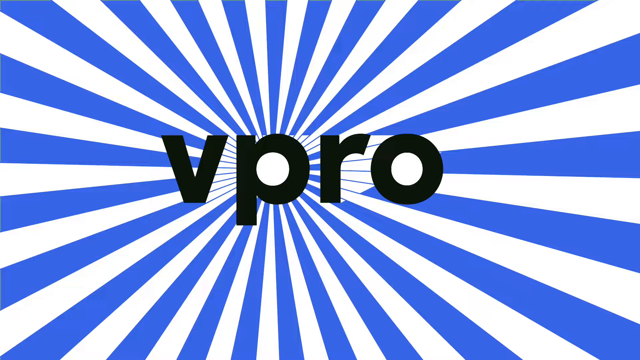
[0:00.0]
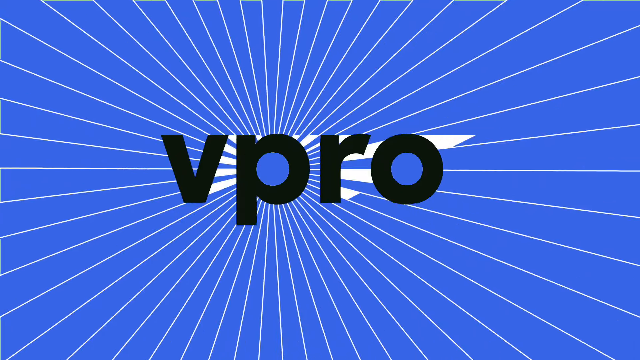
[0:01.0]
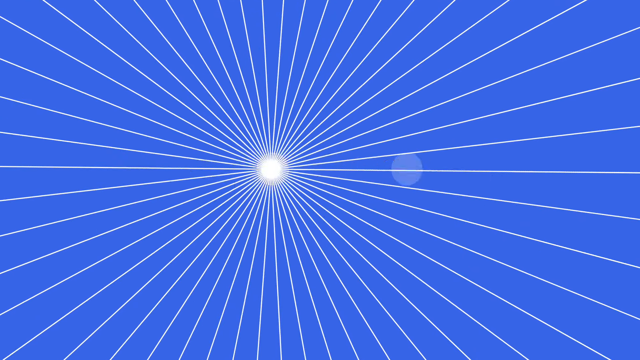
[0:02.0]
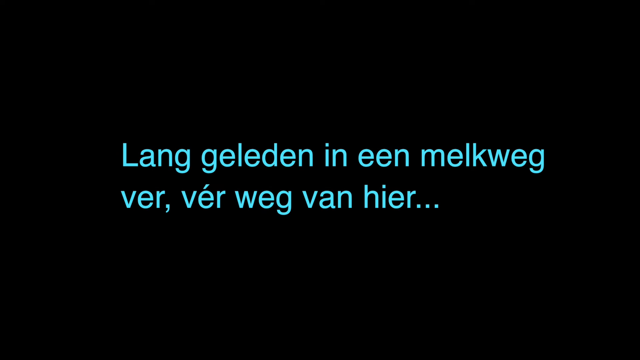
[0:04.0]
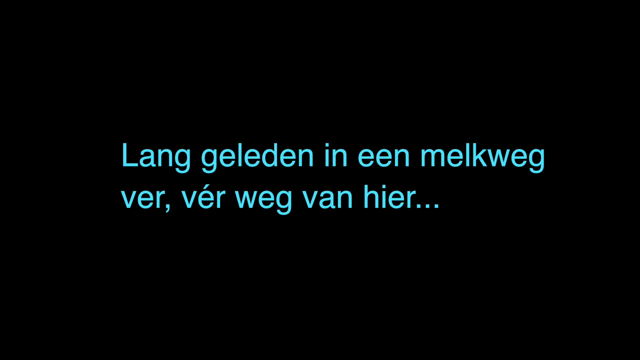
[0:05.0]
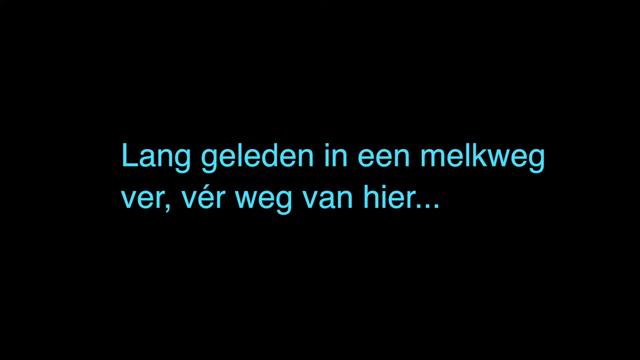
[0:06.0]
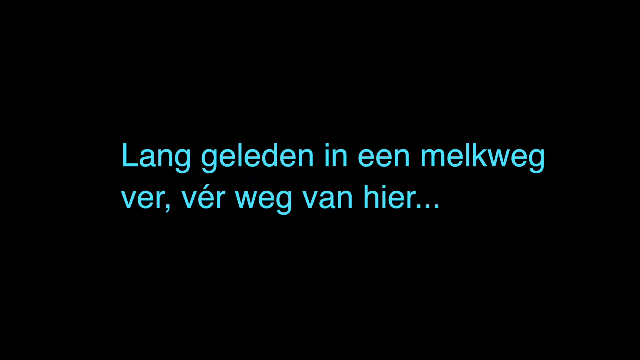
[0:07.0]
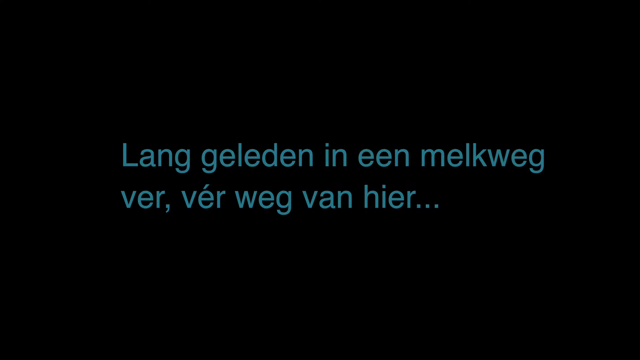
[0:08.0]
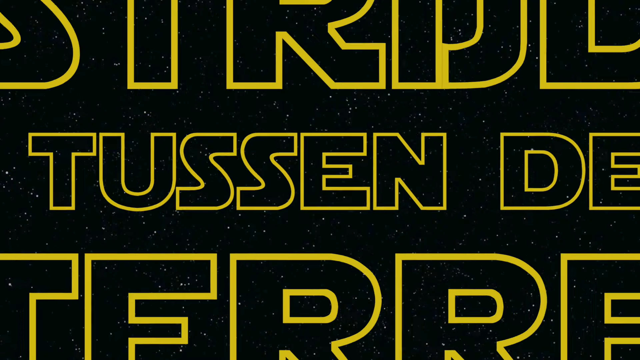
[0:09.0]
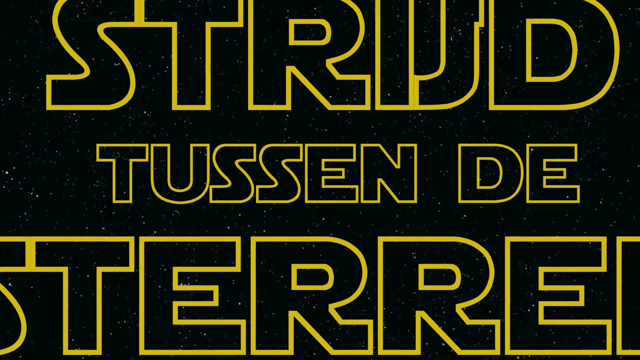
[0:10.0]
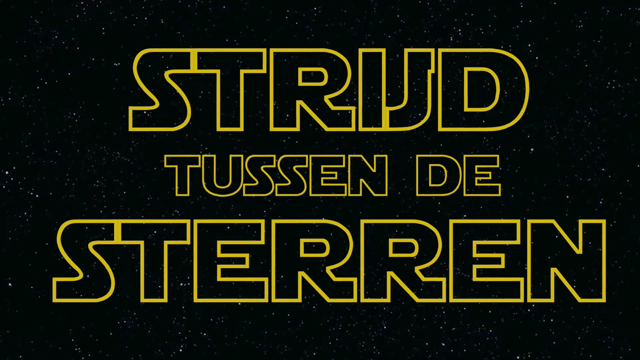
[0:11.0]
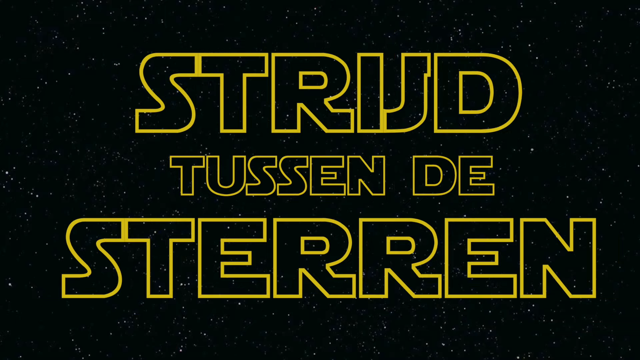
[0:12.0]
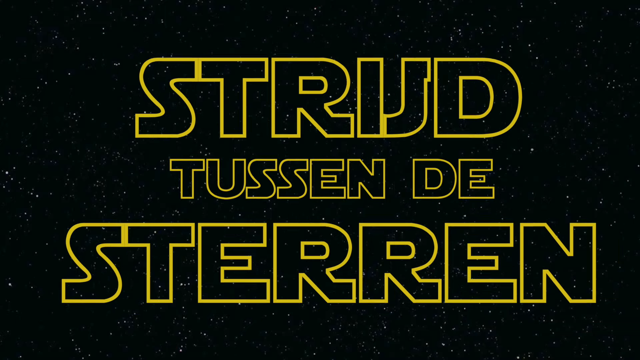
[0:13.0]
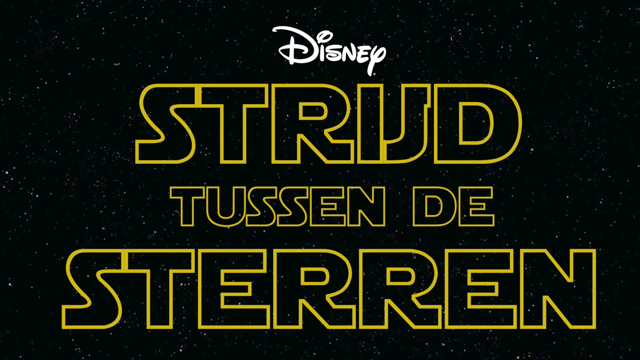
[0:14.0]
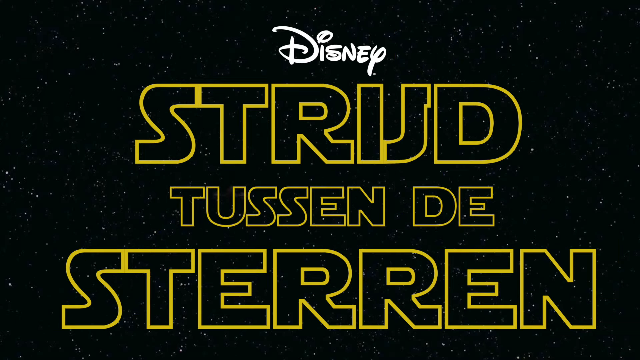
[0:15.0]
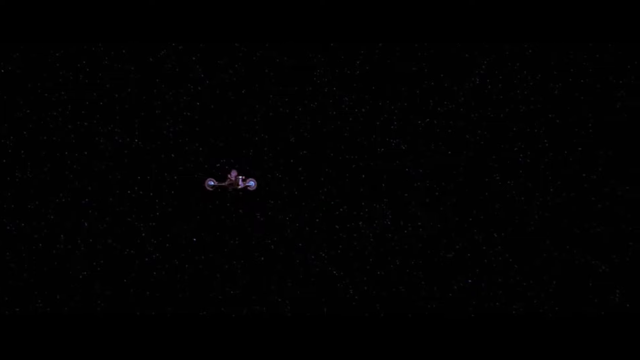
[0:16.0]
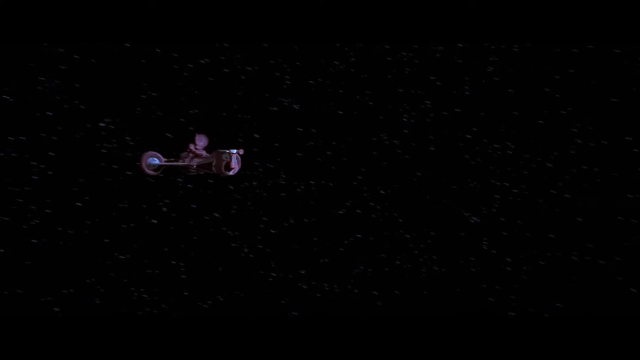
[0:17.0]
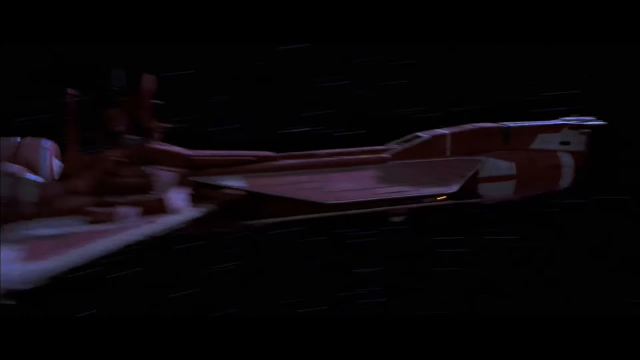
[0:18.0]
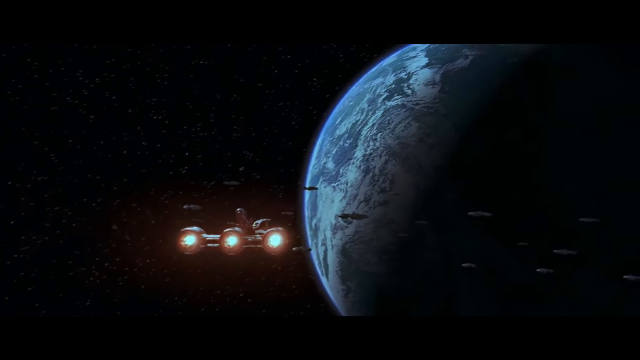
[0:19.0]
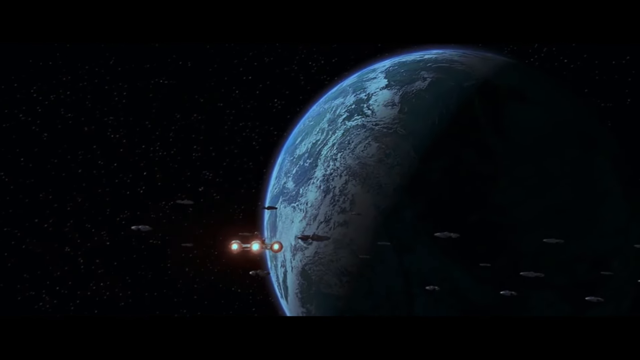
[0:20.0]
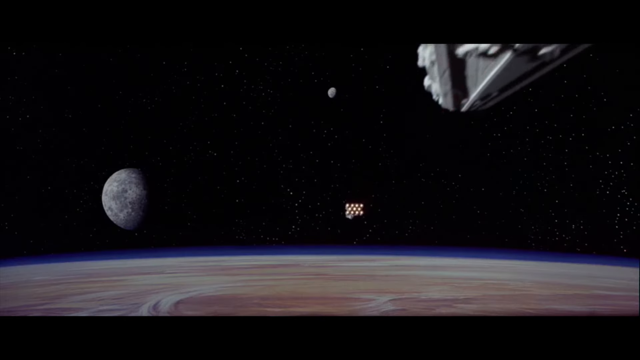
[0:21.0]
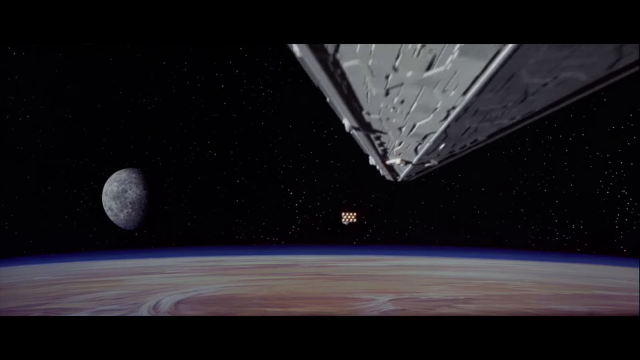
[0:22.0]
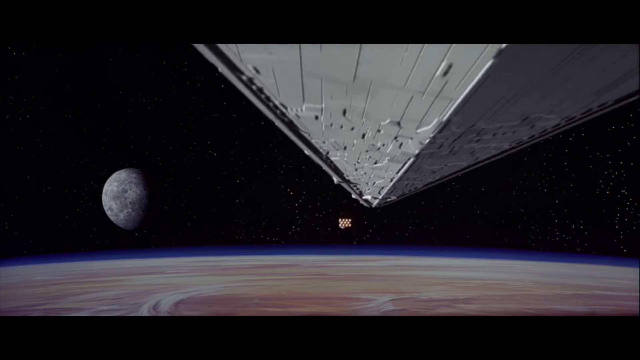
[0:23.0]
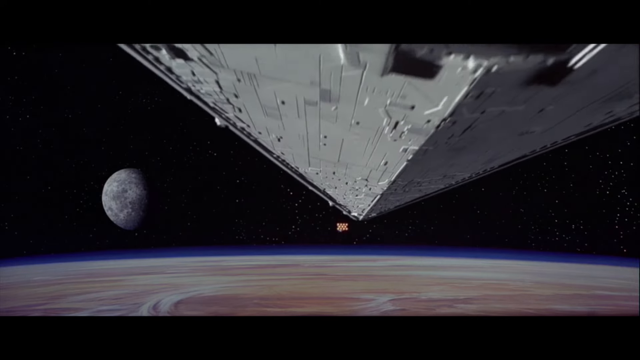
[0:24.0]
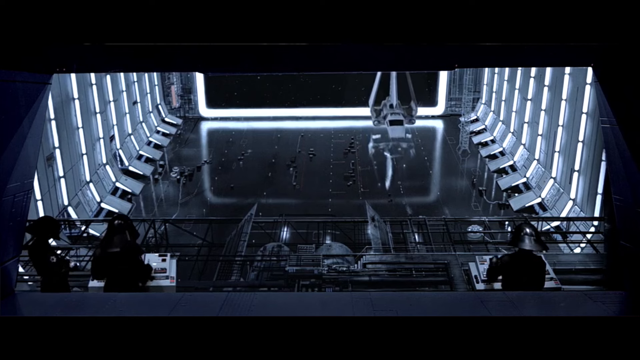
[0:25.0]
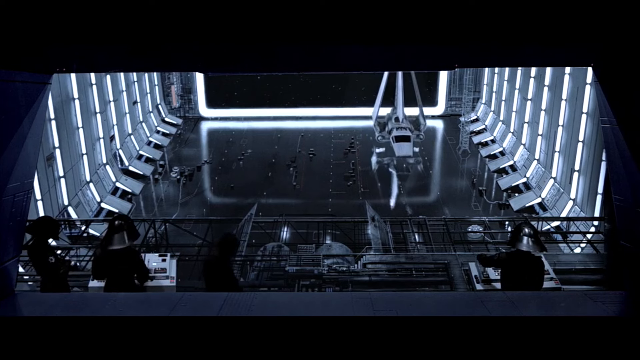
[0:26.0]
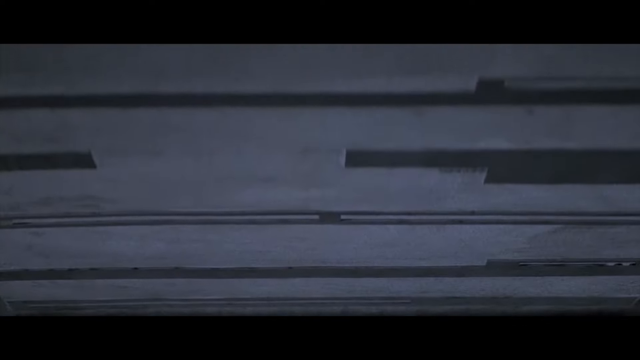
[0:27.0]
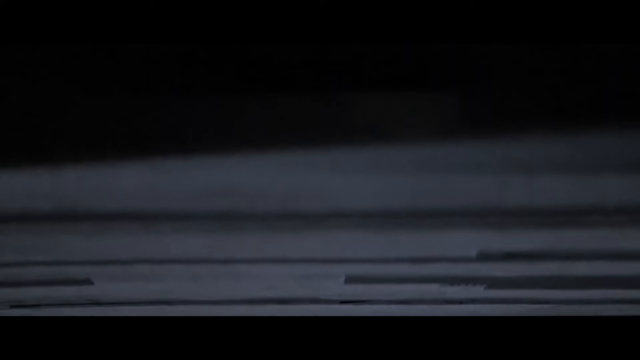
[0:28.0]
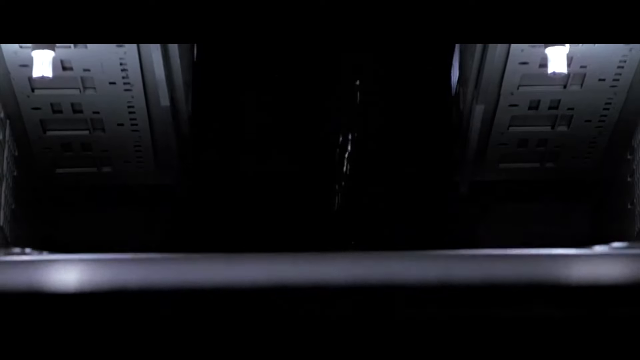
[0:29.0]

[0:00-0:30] The video opens with a welcome logo that says "Vipro" on a spinning neon and white striped background, followed by "Vipro Cinema." Text then appears in a language that looks like it may be German, and more words in the same language follow. Disney appears, and then against a black background a spaceship moves toward planet Earth, seemingly arriving at a space station; it seems to be a movie of some sort. Much of the footage is dark and blurry.